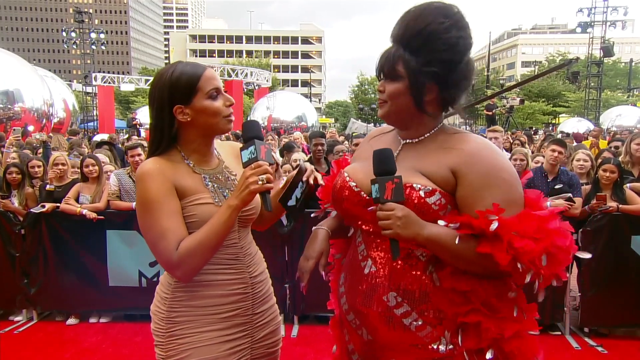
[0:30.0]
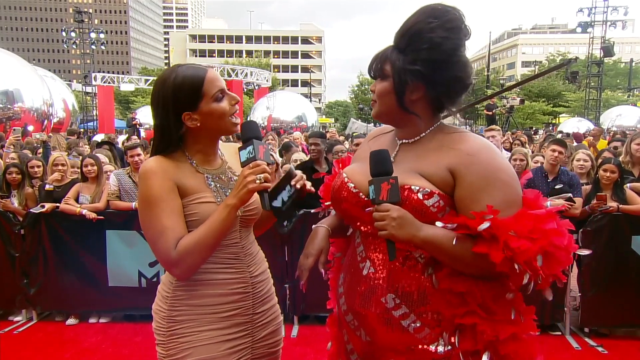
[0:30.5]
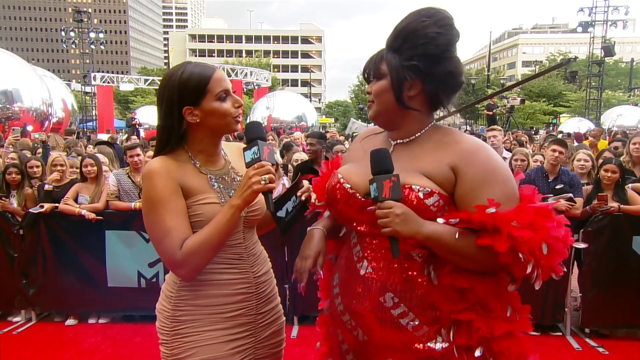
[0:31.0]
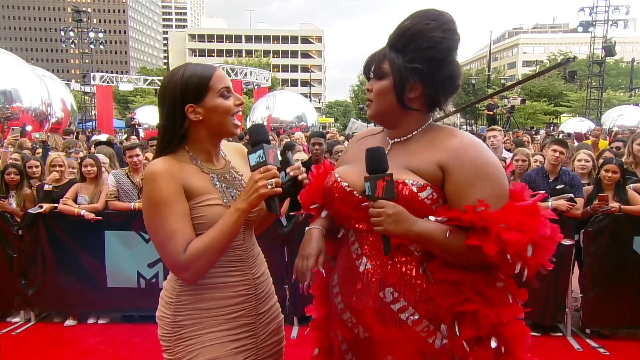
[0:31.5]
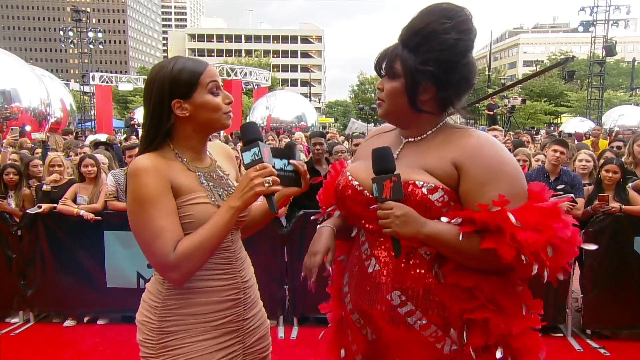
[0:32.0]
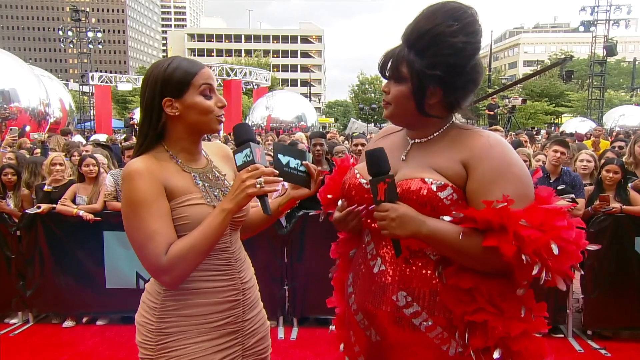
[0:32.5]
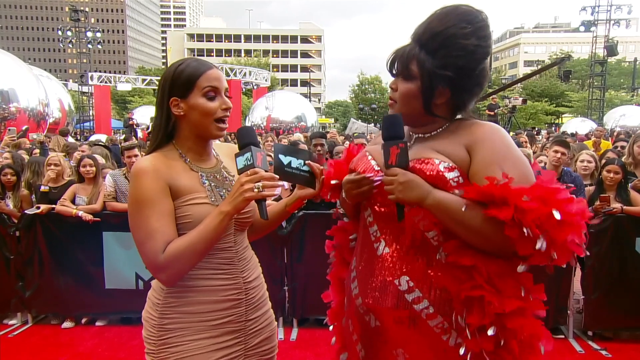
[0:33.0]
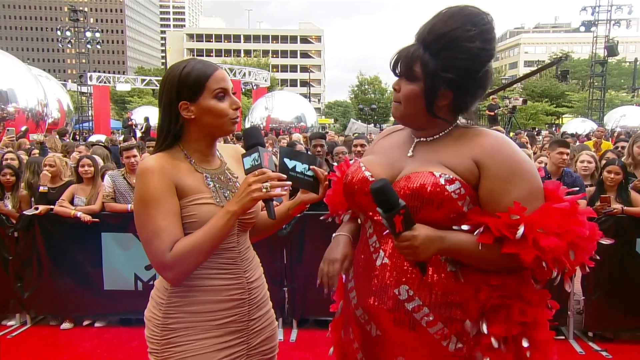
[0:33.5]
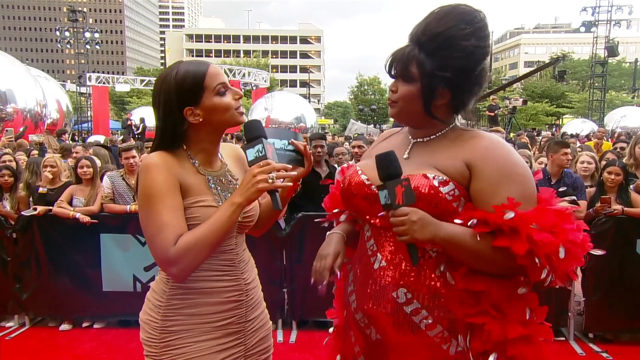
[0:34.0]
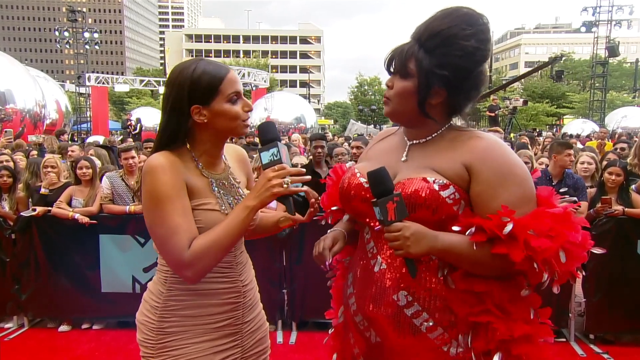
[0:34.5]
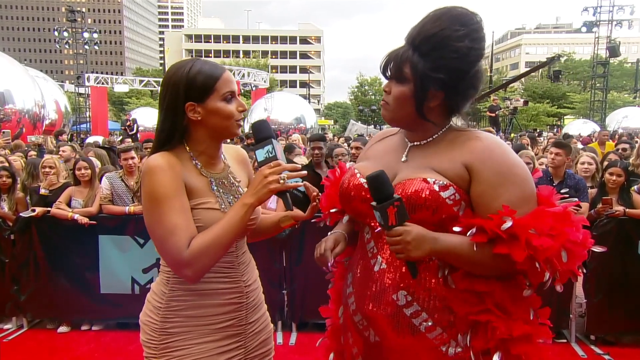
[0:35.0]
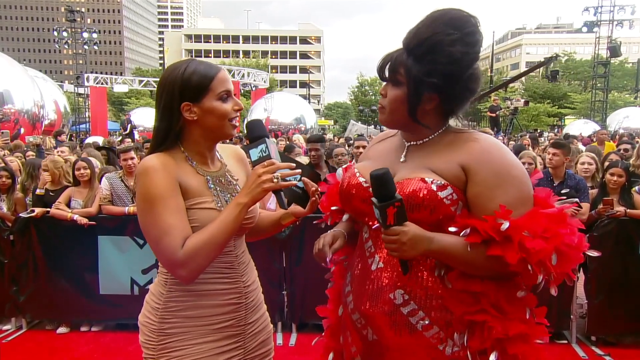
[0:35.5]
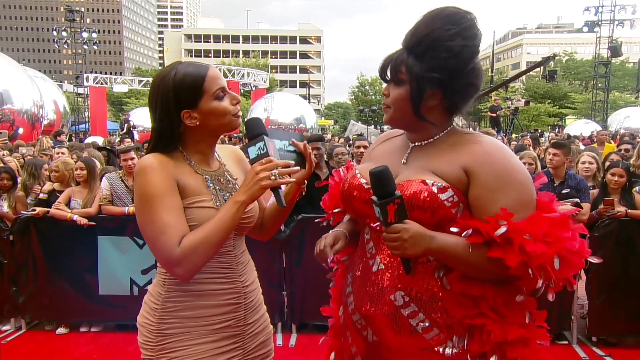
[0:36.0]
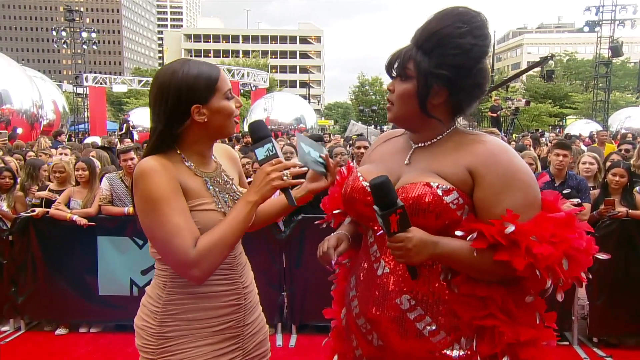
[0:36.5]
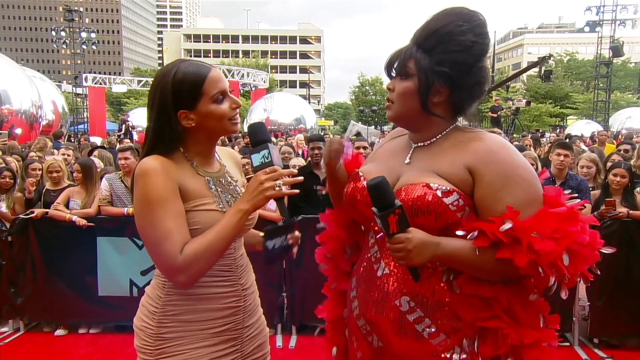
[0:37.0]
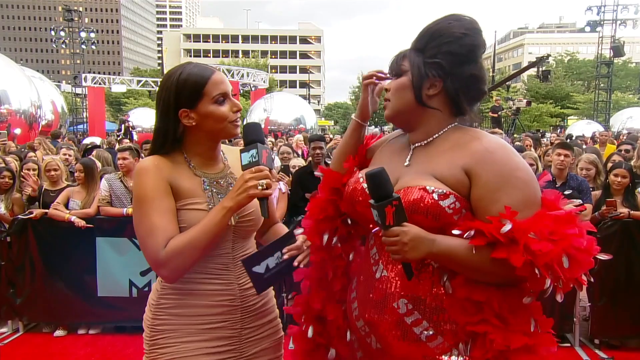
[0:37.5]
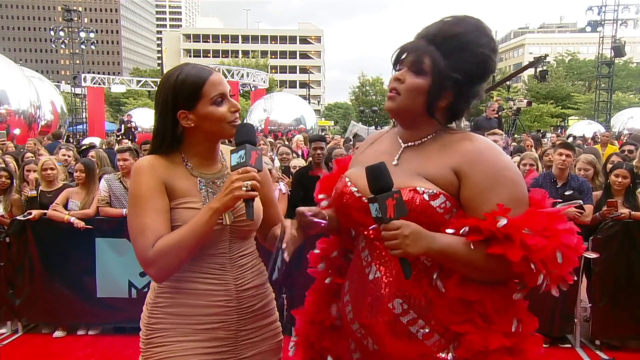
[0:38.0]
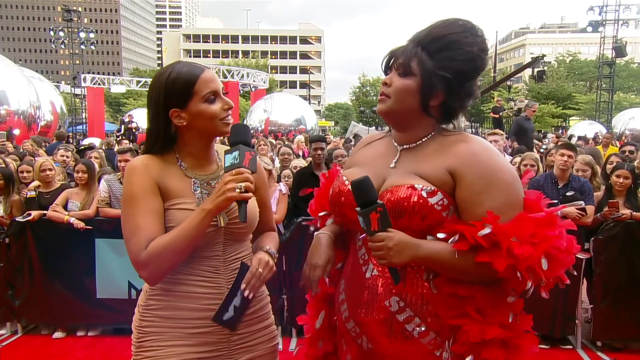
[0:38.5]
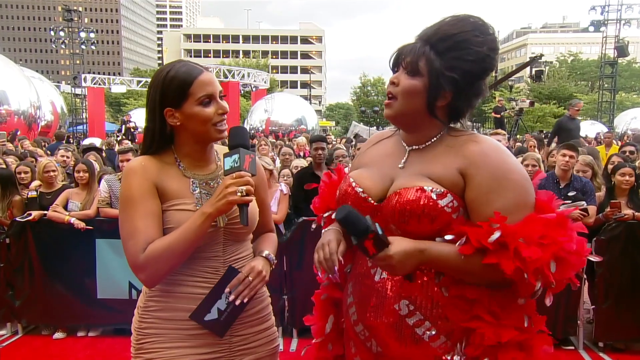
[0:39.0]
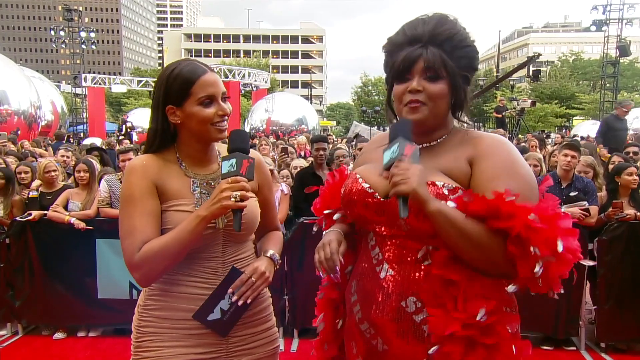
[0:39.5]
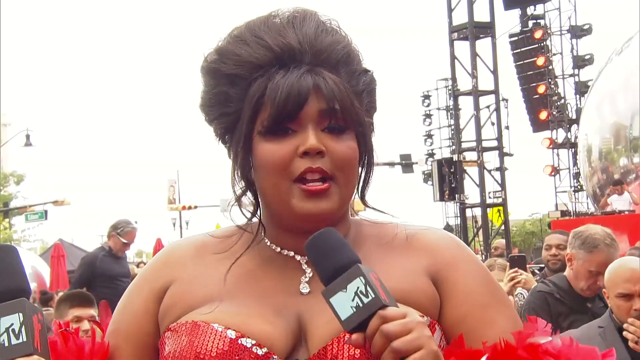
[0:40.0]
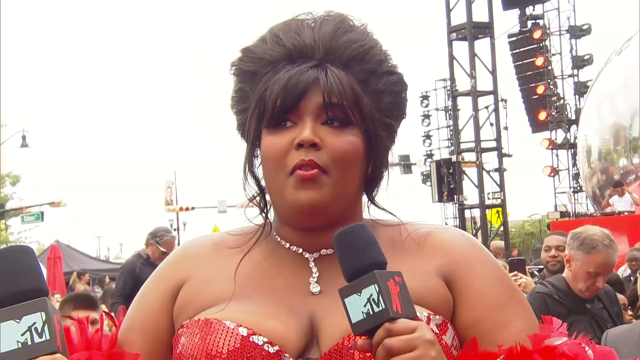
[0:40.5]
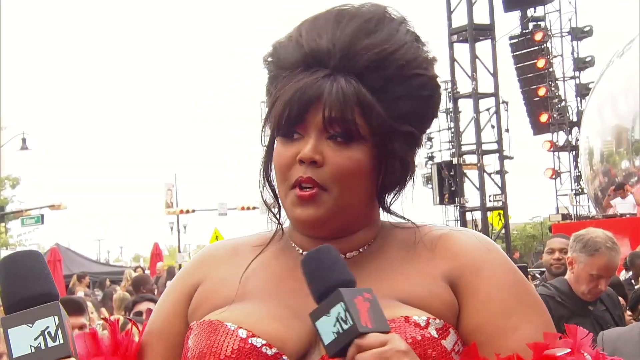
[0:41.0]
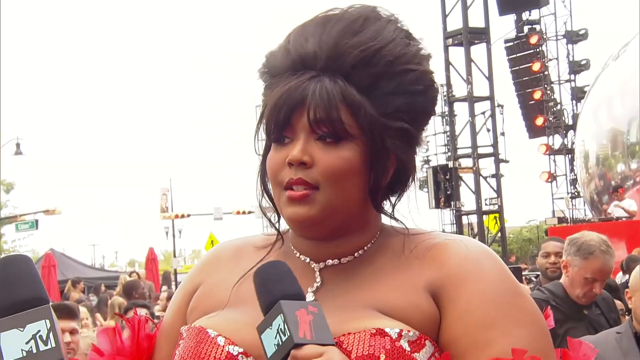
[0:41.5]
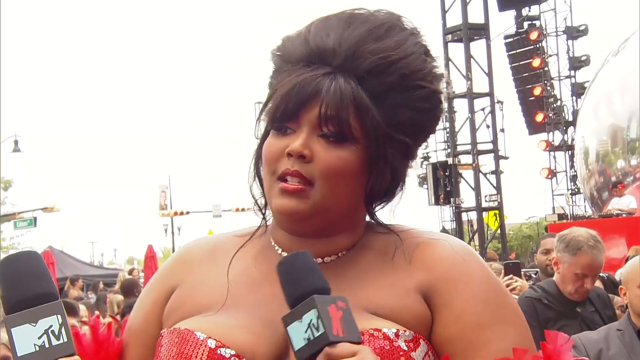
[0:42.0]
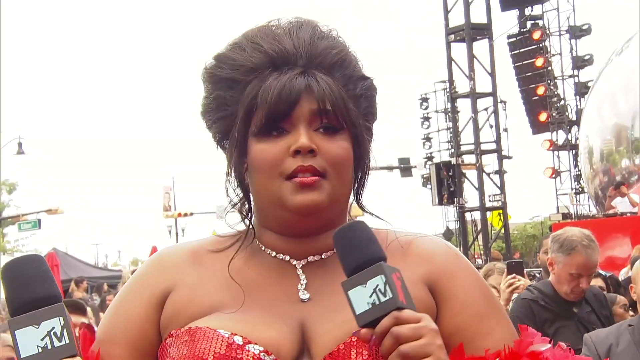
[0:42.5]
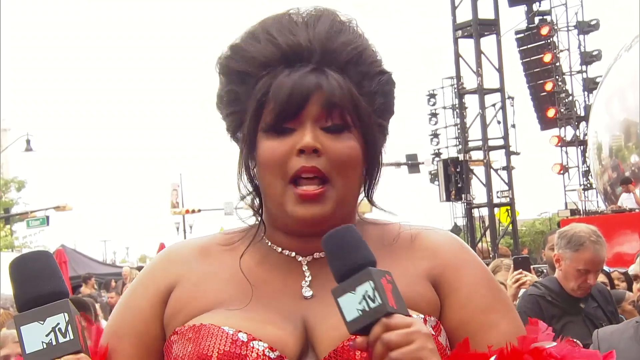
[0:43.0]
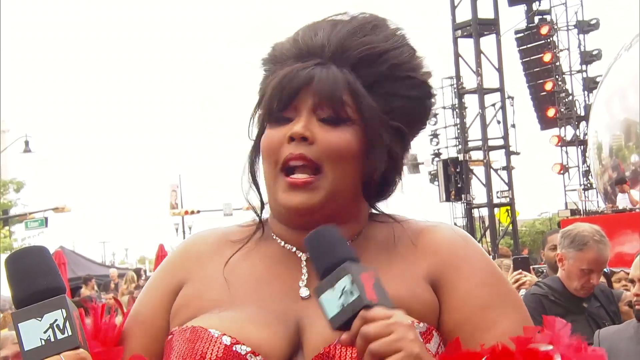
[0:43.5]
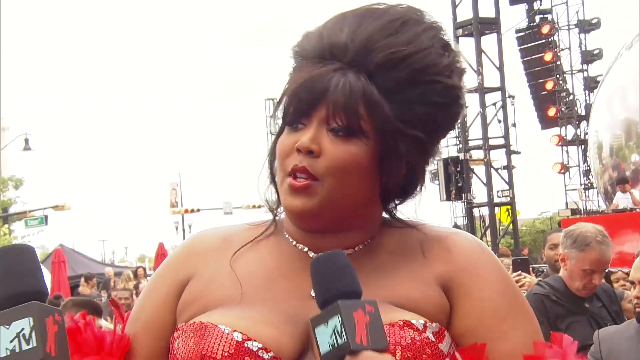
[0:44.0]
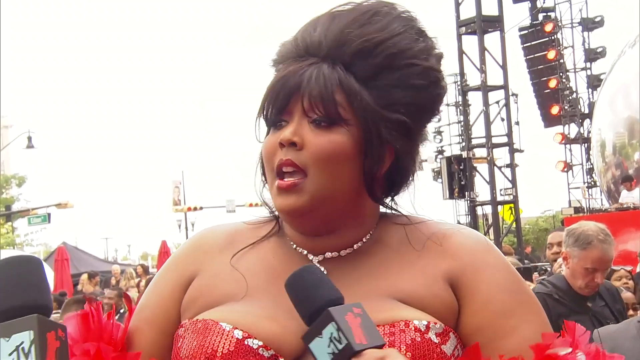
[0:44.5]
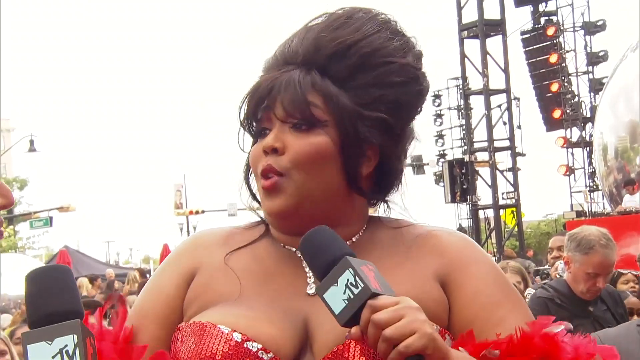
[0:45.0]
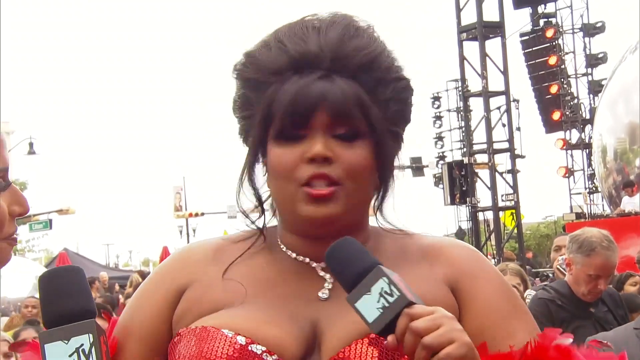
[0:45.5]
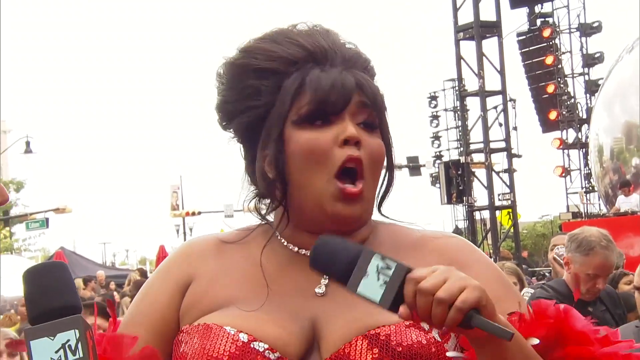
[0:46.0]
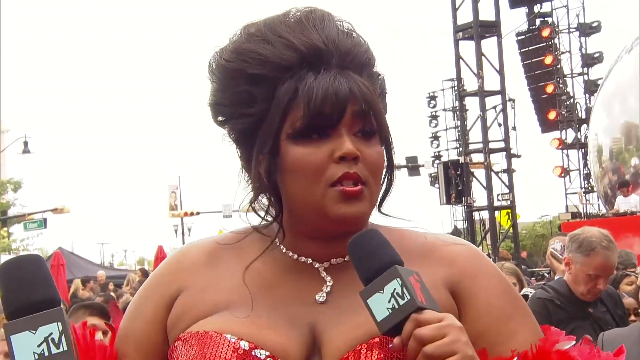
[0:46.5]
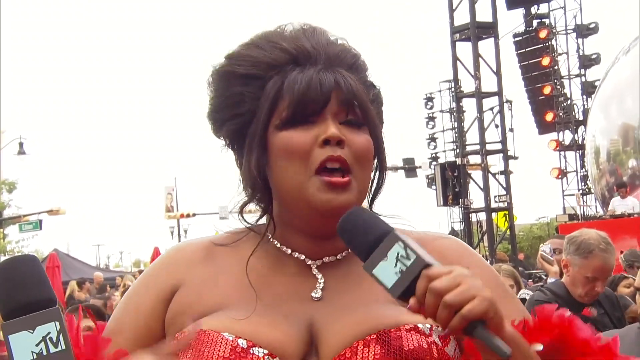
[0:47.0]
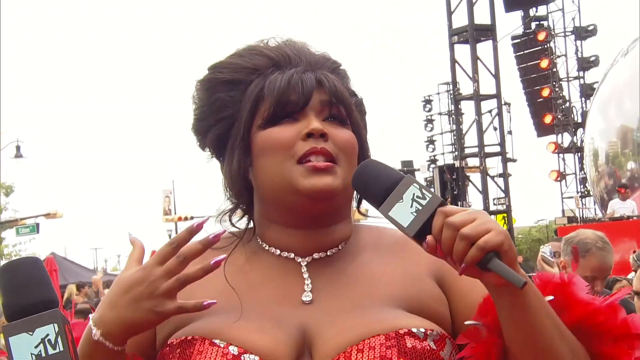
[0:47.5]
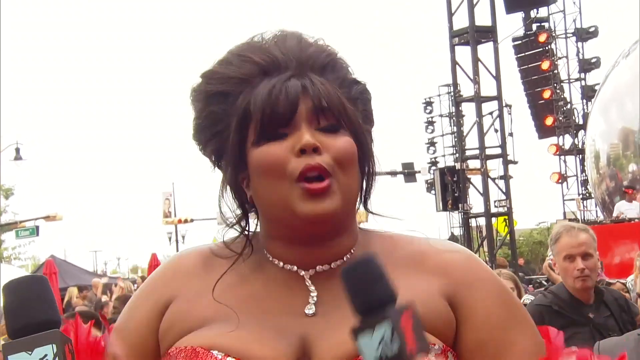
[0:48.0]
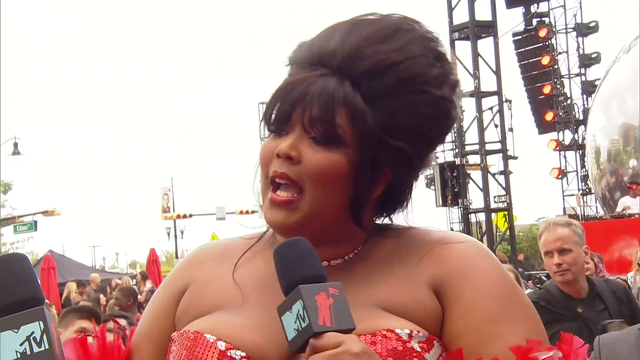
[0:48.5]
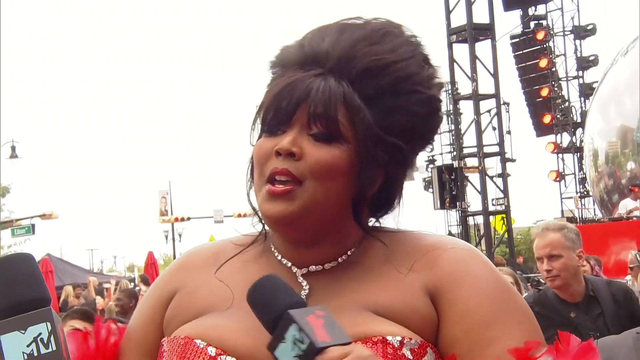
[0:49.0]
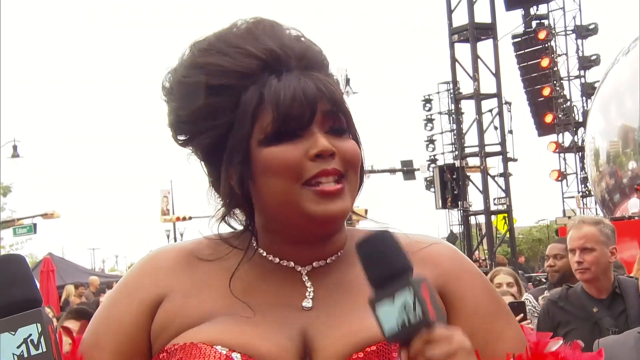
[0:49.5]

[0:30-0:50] The woman in beige continues asking questions, looking a little more serious now, while Lizzo looks directly at her very intently and nods along as she talks. Lizzo brushes aside some of her bangs, takes a deep breath and responds to the question. The camera angle switches to look more directly at Lizzo, from slightly below, looking up at her as she answers. She is not smiling as much; she looks as if she is discussing something serious, and she kind of waves her hand toward herself as she gestures, seemingly talking about her own feelings or emotions about something. Her dress appears to say the word "siren" in white sequins.